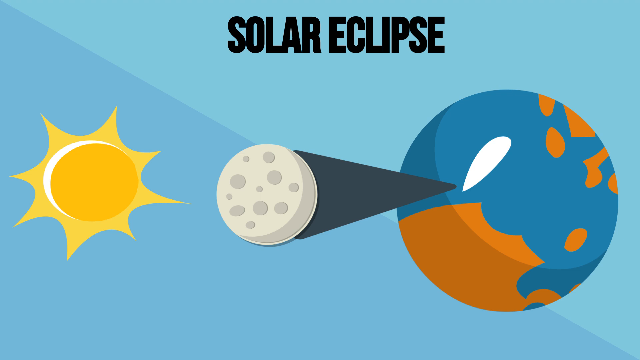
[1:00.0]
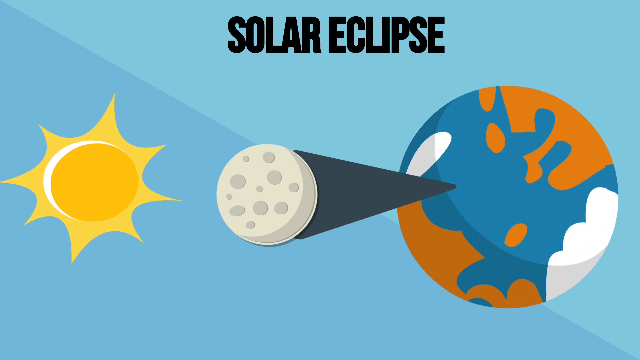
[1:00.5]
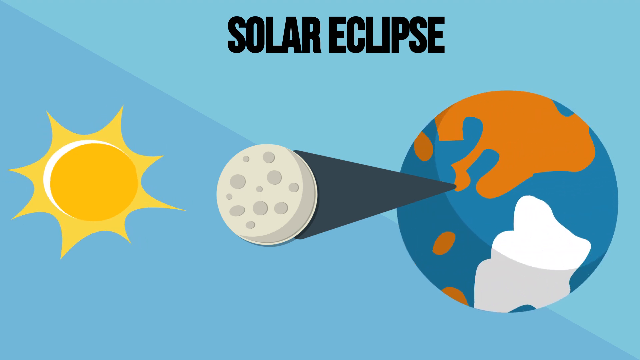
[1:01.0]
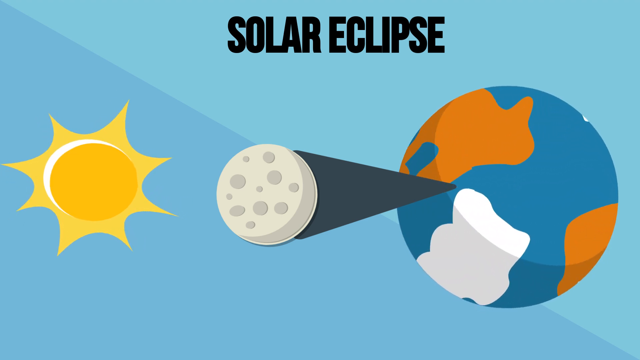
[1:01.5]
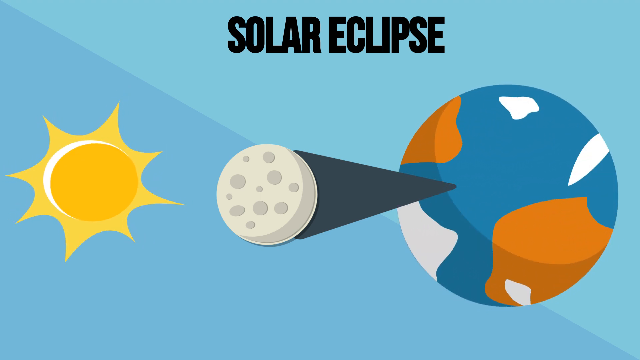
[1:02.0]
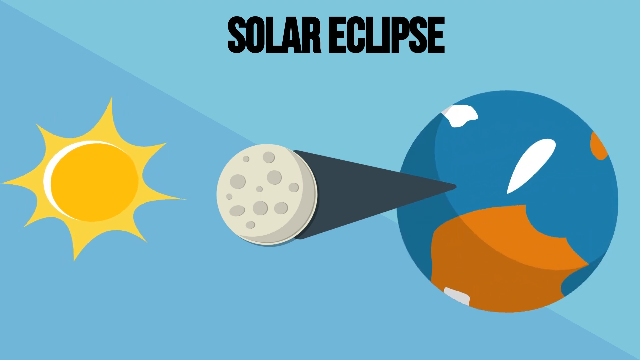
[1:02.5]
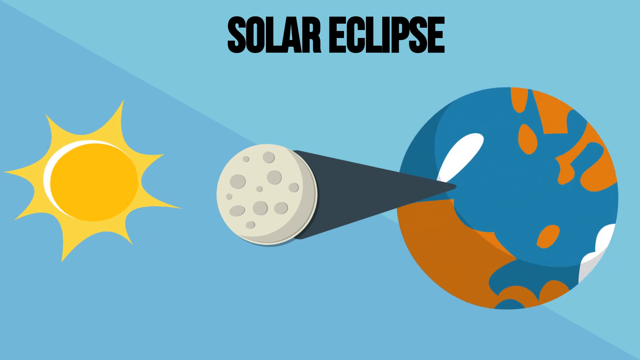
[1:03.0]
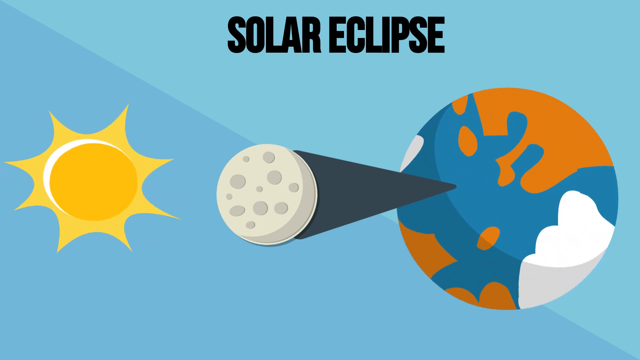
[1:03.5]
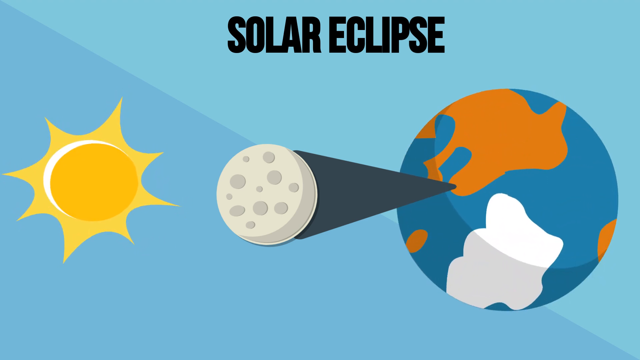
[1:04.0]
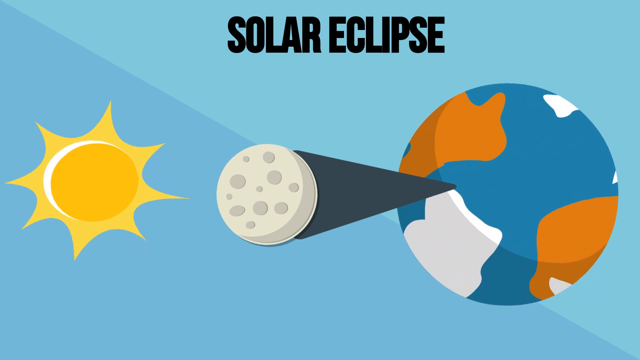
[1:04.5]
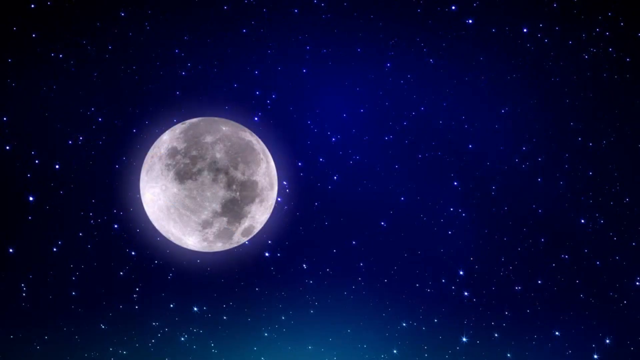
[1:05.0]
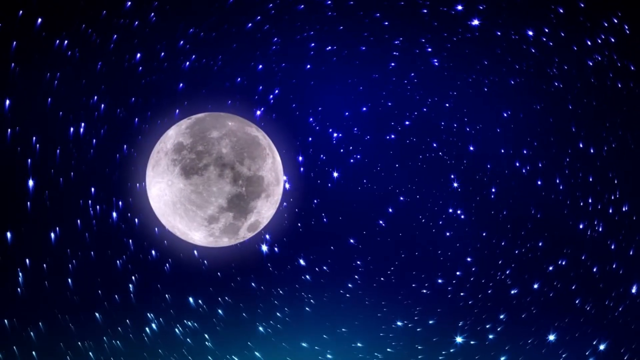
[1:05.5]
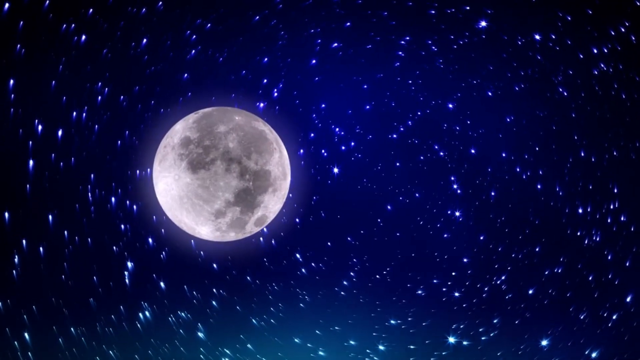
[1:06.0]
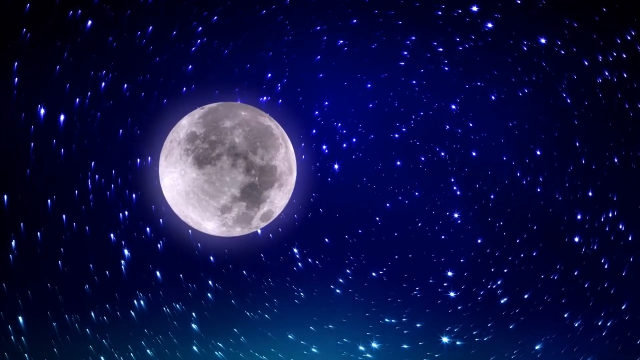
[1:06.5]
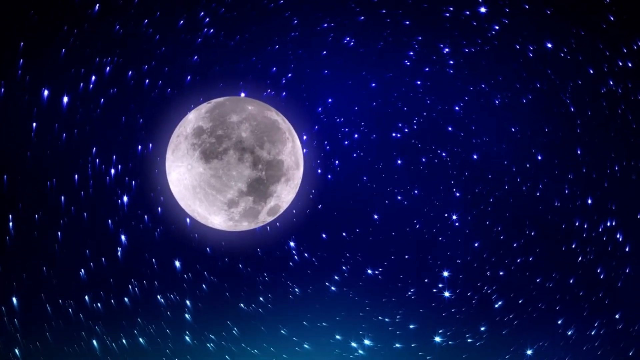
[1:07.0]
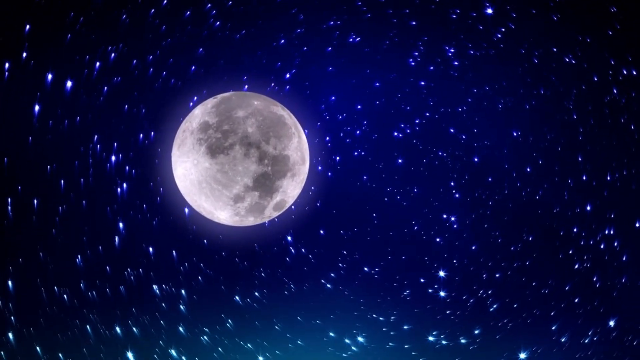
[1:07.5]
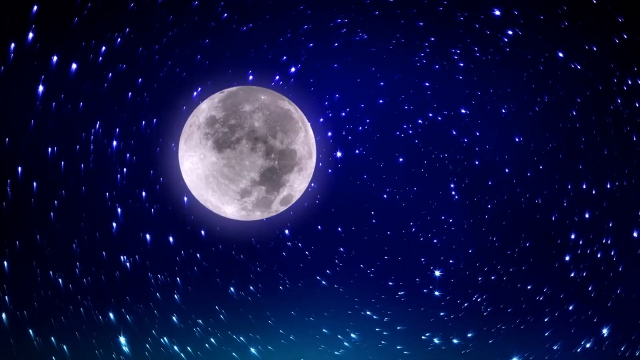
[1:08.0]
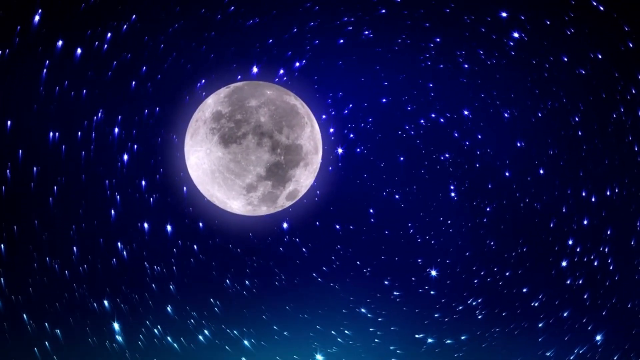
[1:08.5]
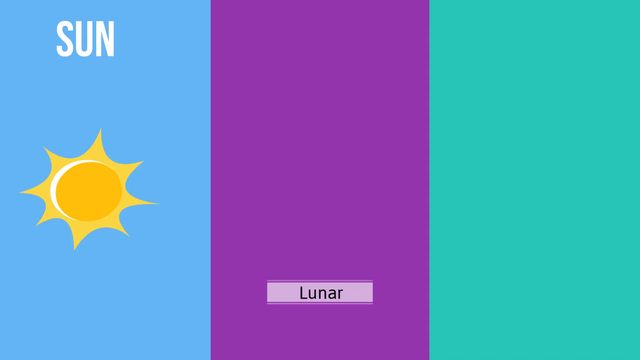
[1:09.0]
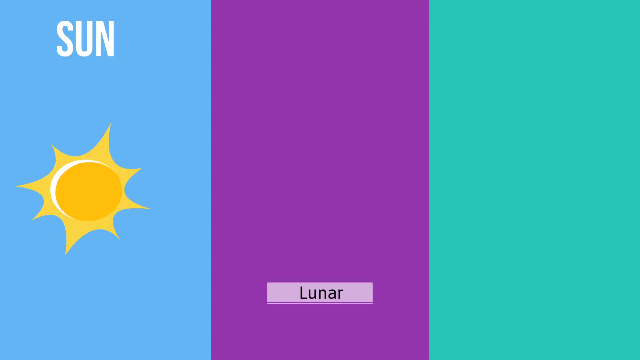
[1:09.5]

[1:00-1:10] A cartoon rendition shows the sun on the far left, the moon in the center, and the spinning Earth on the far right. Above it are the words "solar eclipse." With the moon between them, the moon's shadow falls on the Earth as it spins.